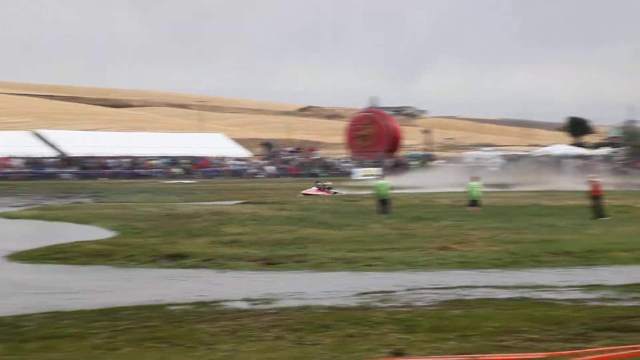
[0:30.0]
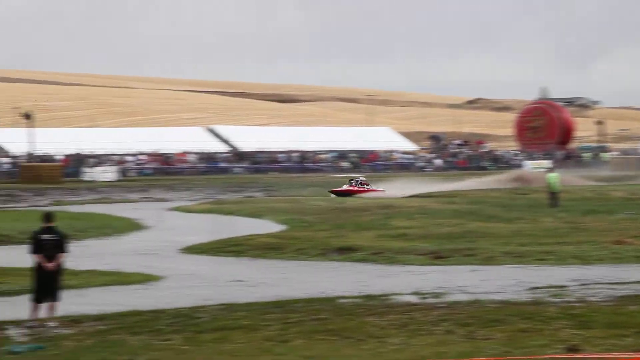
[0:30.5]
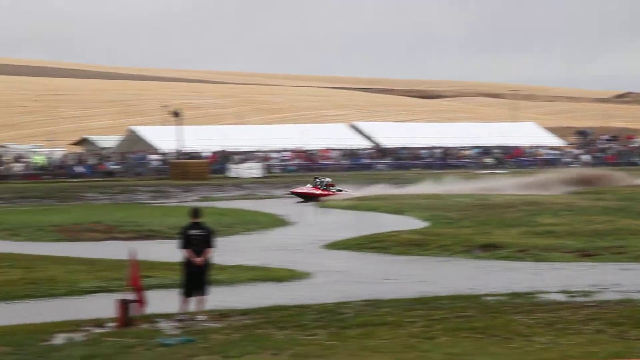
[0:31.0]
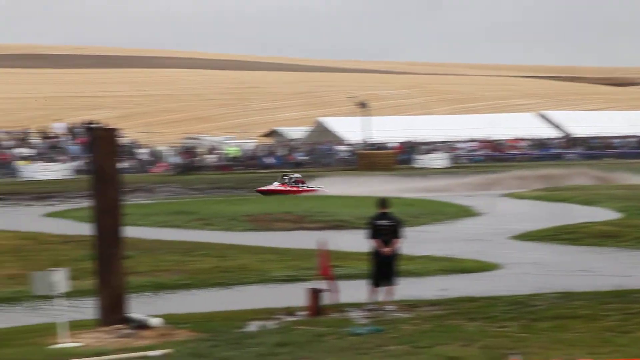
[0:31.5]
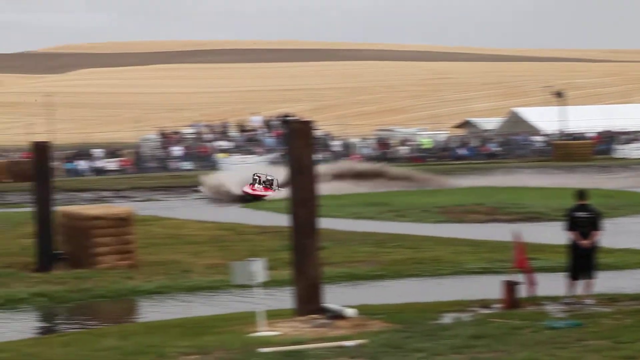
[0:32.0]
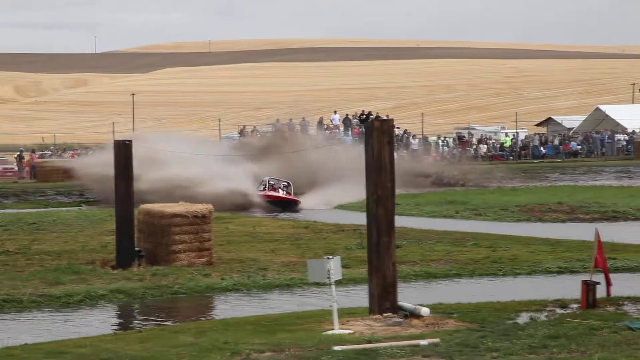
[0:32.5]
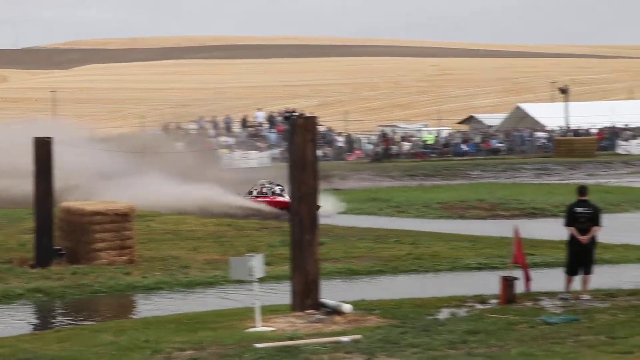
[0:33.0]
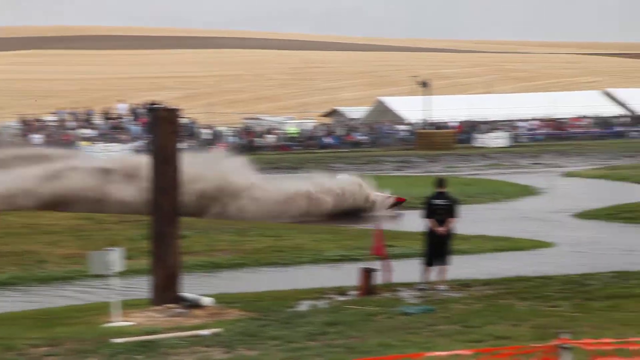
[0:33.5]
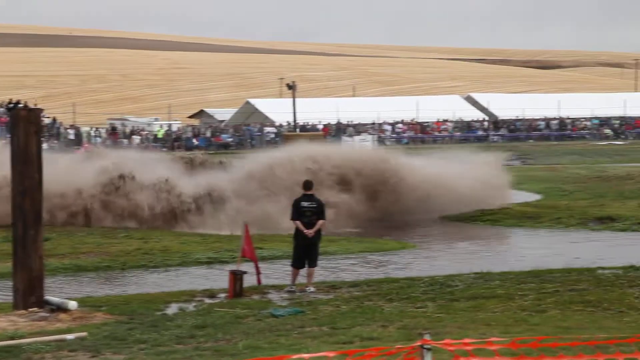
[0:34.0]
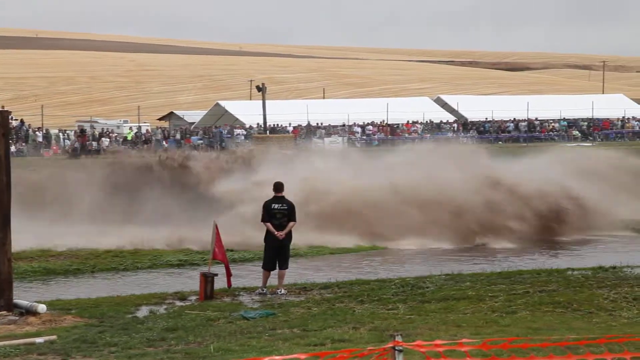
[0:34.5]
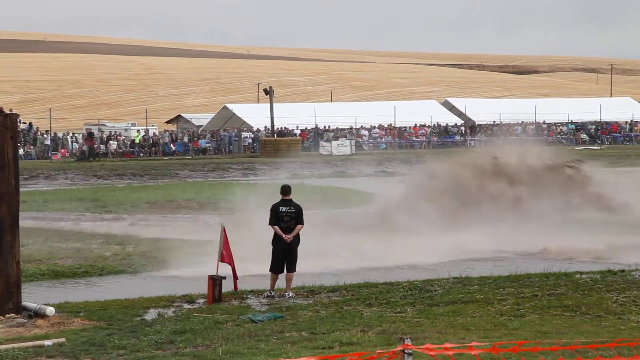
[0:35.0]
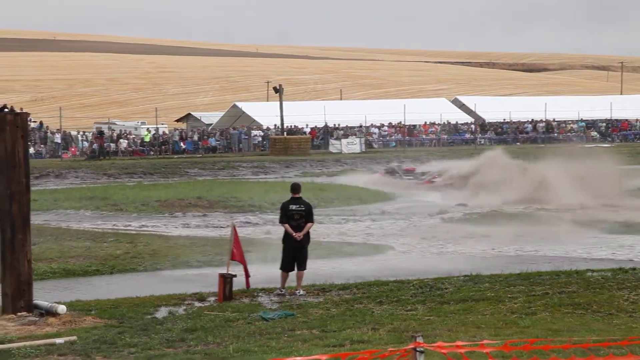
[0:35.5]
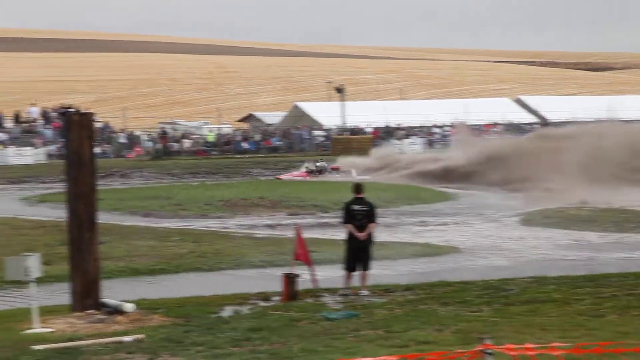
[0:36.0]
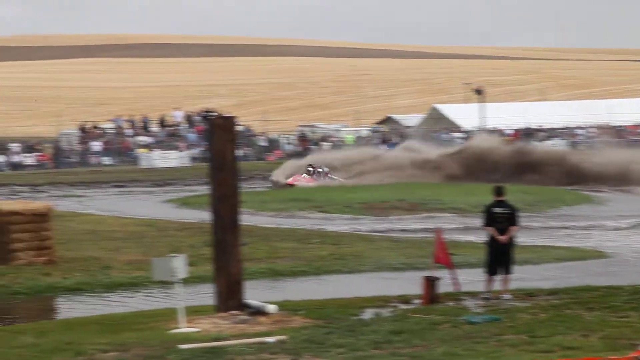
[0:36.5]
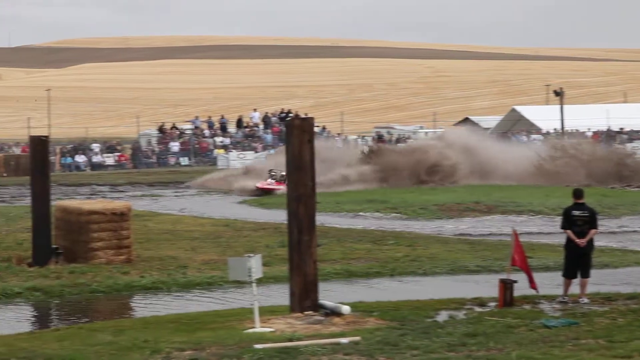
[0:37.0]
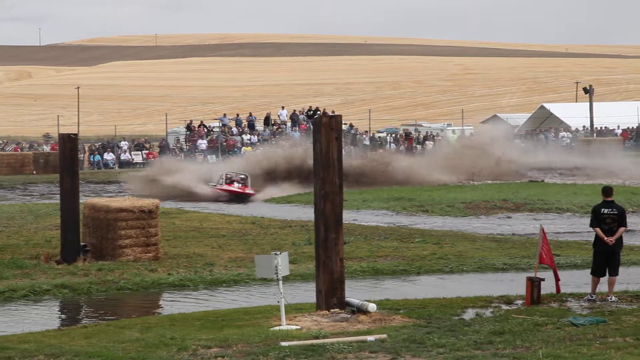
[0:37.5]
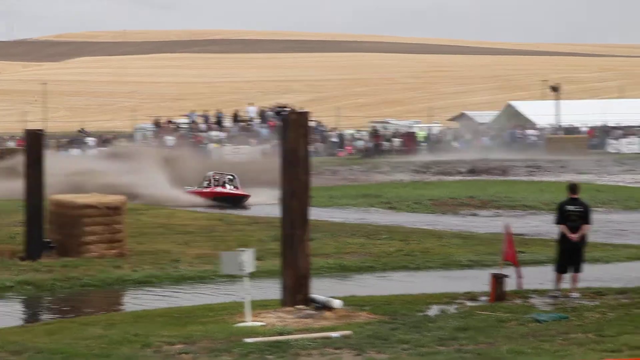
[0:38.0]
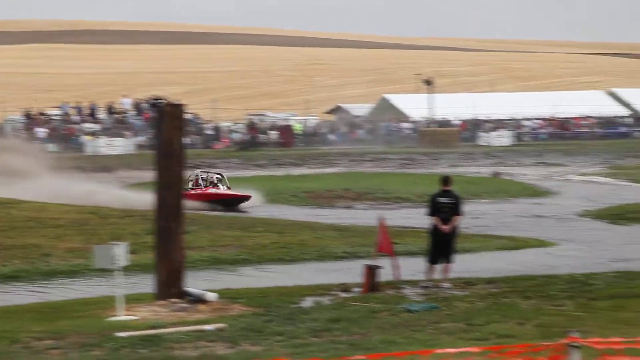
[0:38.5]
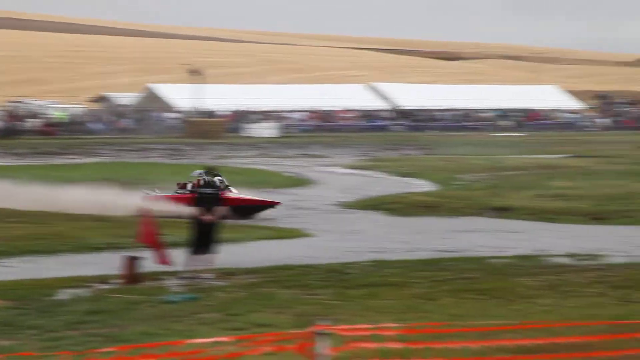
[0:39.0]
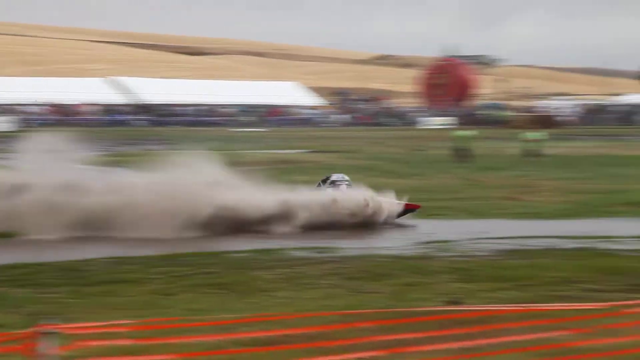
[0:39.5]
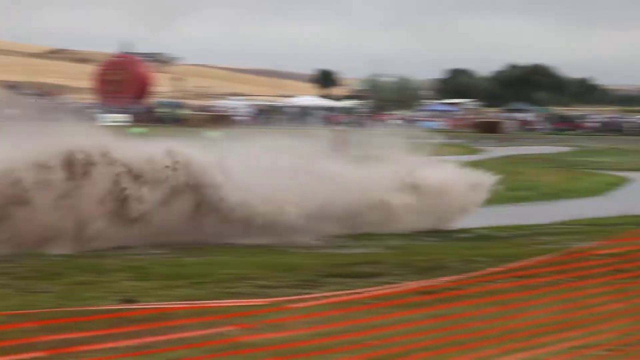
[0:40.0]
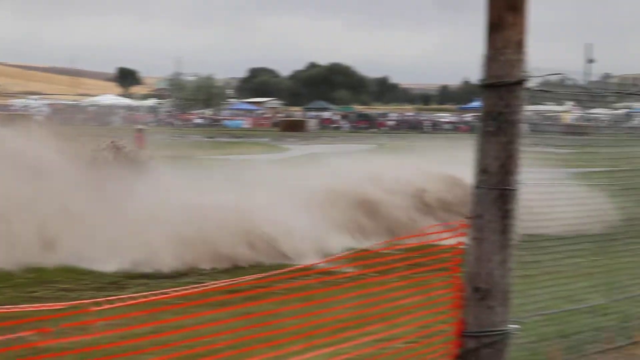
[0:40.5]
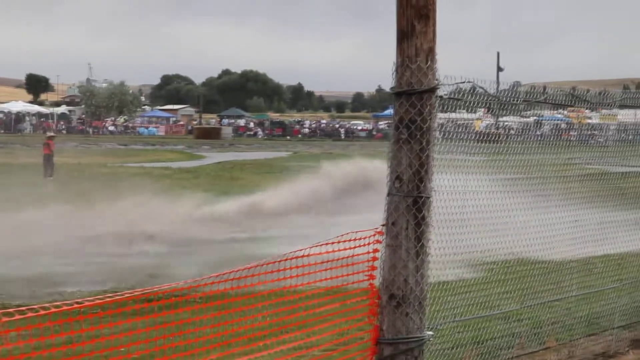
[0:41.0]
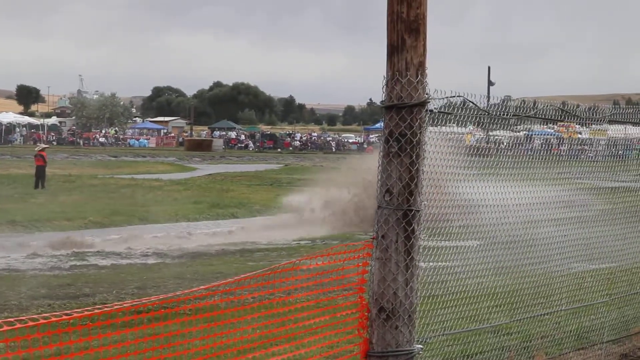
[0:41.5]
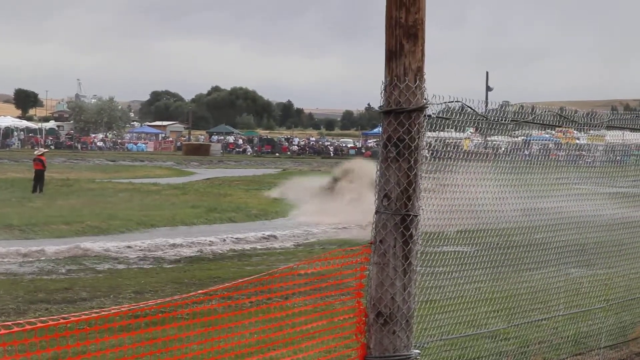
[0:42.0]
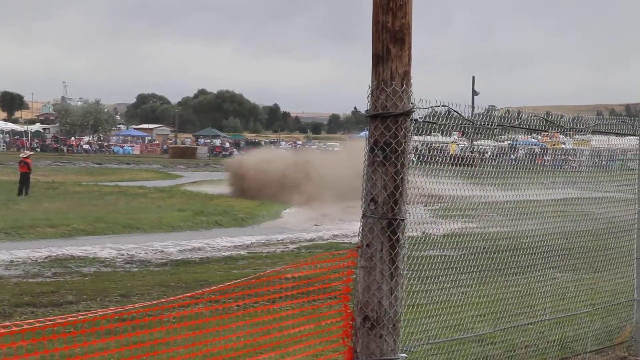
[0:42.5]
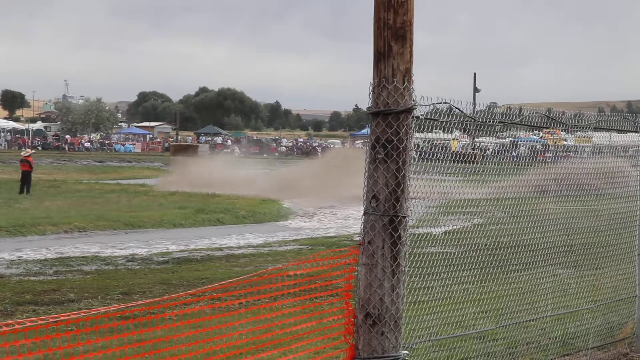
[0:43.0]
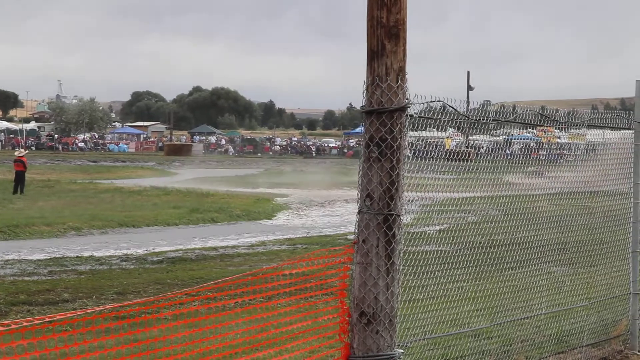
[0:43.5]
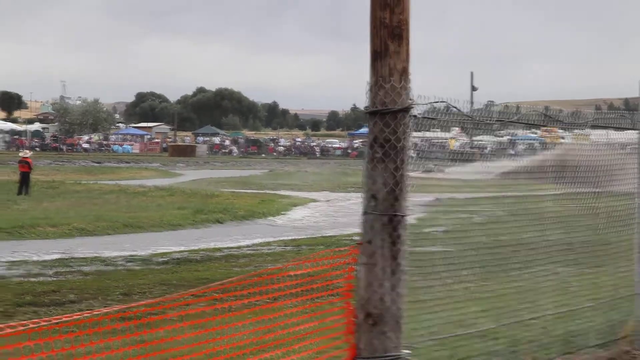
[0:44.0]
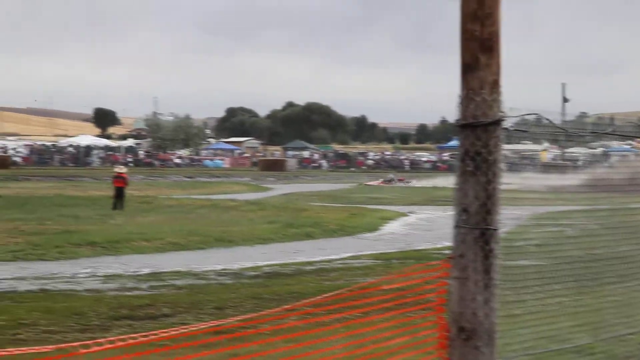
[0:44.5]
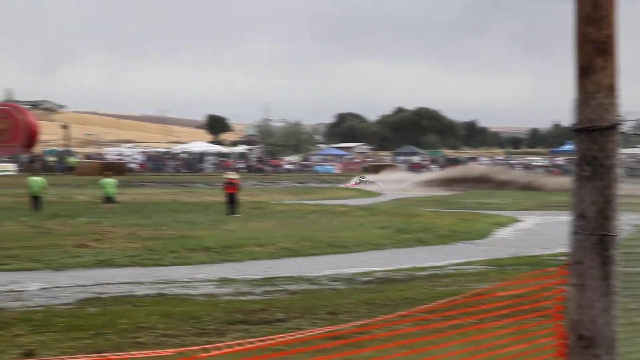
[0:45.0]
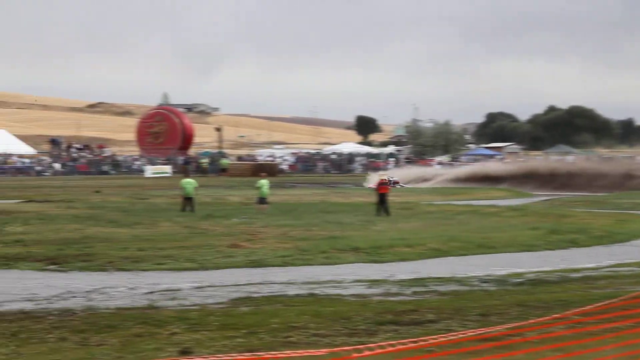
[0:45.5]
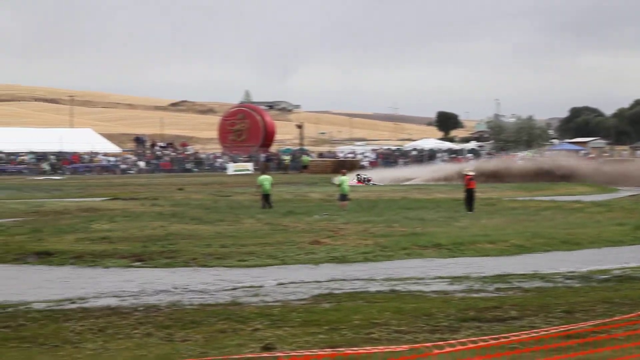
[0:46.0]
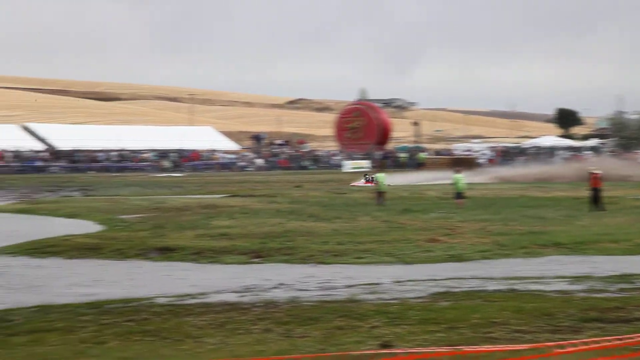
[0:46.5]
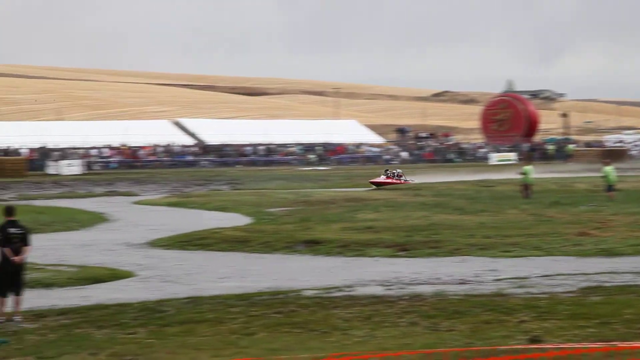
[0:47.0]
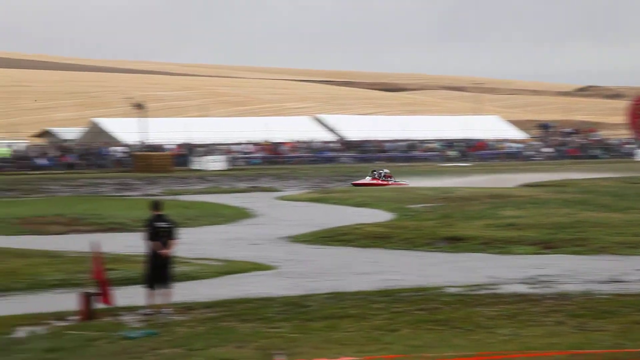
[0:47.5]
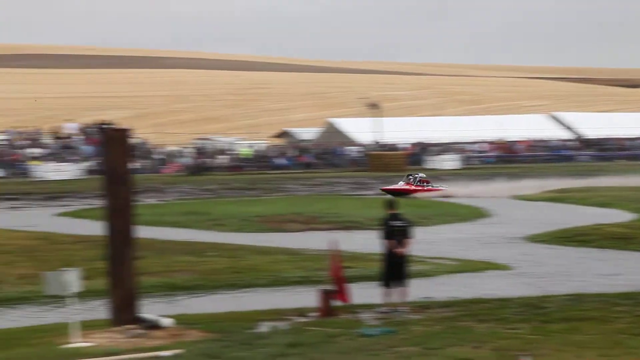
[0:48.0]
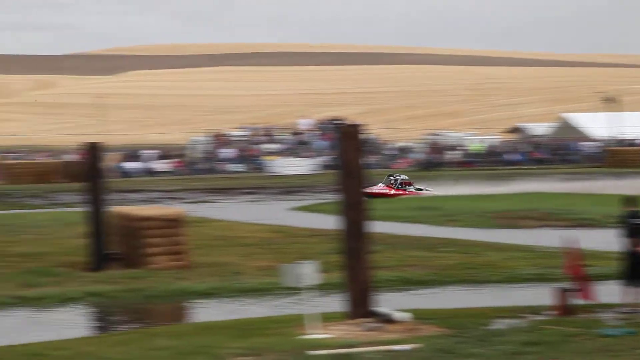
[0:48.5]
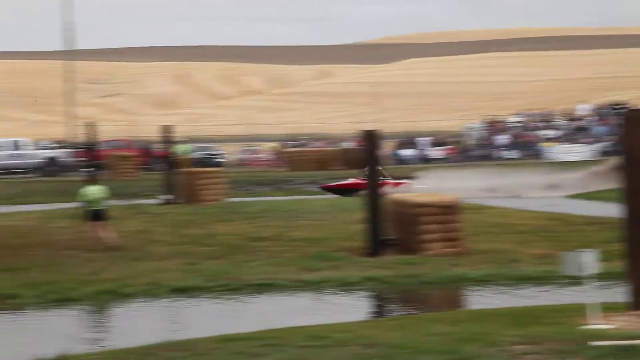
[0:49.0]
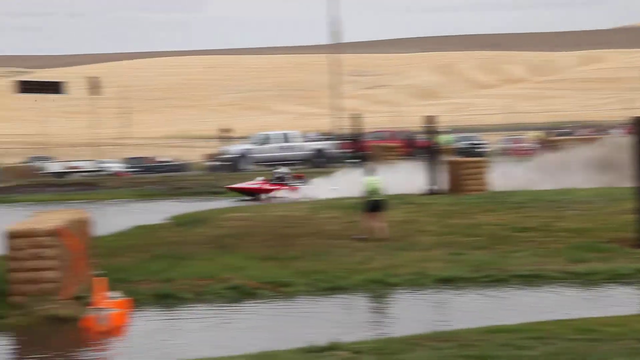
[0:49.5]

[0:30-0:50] The craft continues to move at high speed around the waterways, displacing large amounts of murky water behind it and onto the grass surrounding the inlets. Three stewards are on the main central piece of land, one wearing red and the other two wearing luminous yellow jackets. The boat speeds round the waterway to a circular section, where it spins round and does two loops before flying back round the course. Behind the main course there appear to be possibly sand dunes. Large white structures that look like giant corporate tents of some kind stand out behind the course, along with a lot of parked vehicles. A marshal wearing black intently watches as the boat goes by. A number of people are standing on top of cars so they can see over the fence.